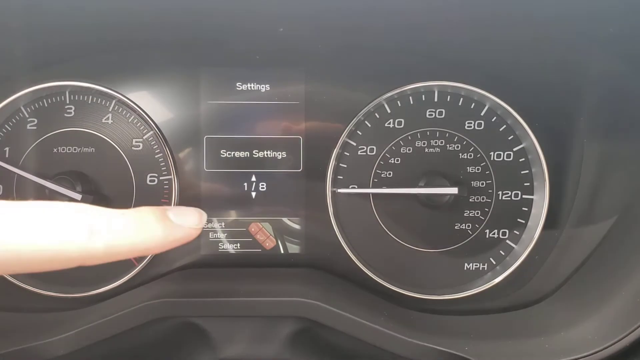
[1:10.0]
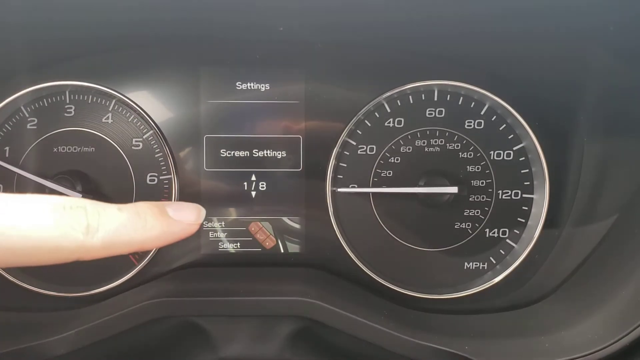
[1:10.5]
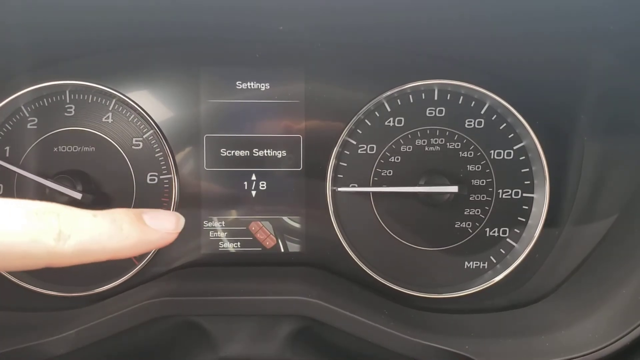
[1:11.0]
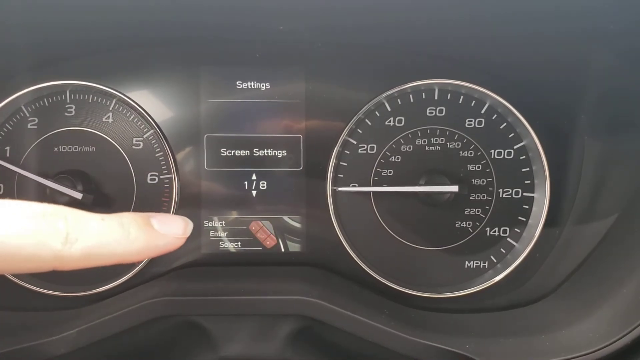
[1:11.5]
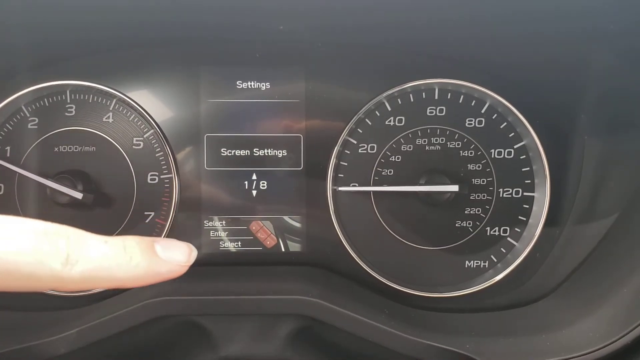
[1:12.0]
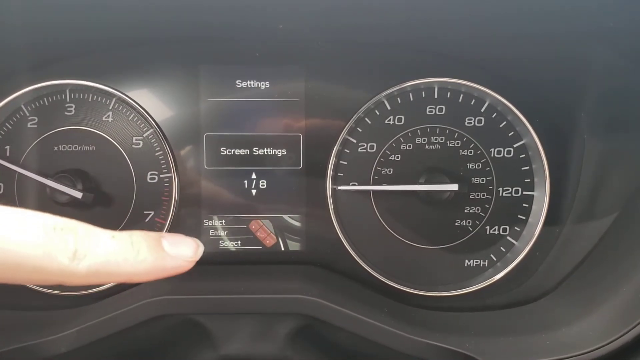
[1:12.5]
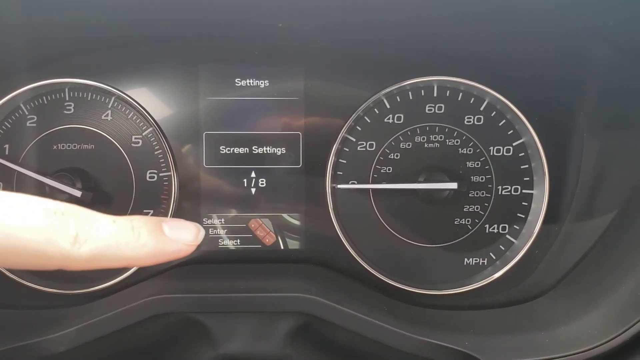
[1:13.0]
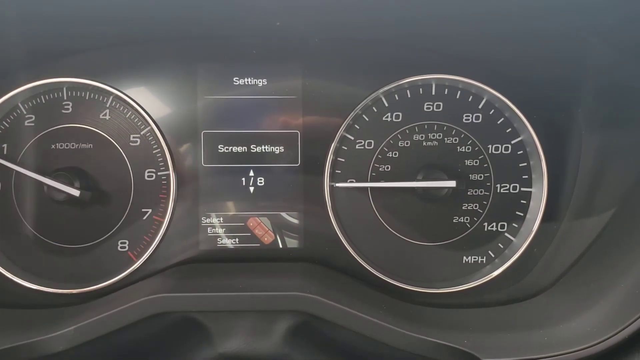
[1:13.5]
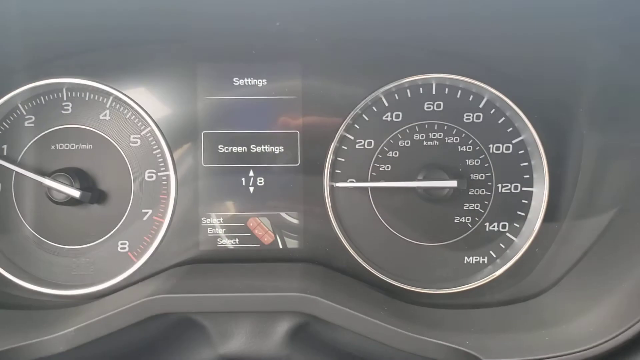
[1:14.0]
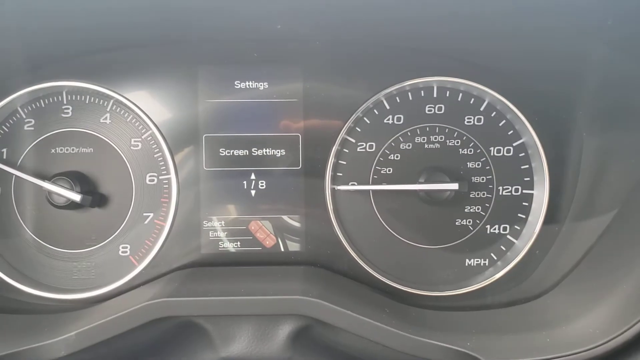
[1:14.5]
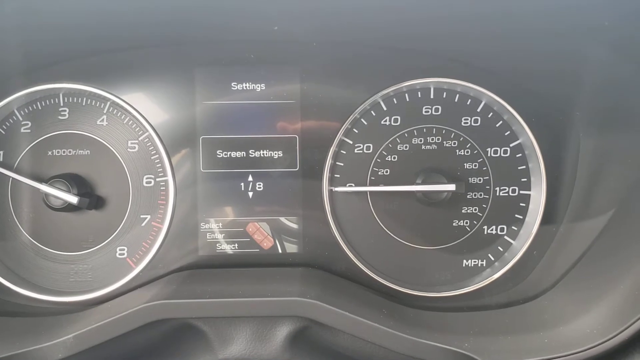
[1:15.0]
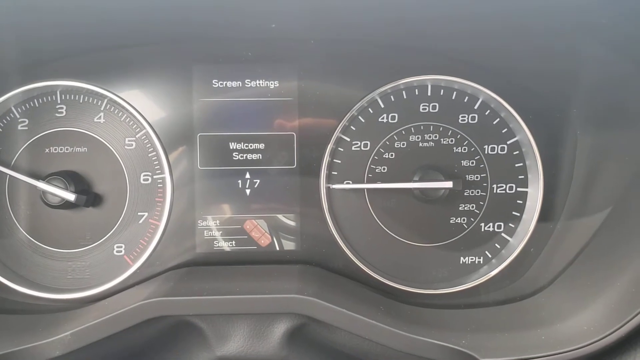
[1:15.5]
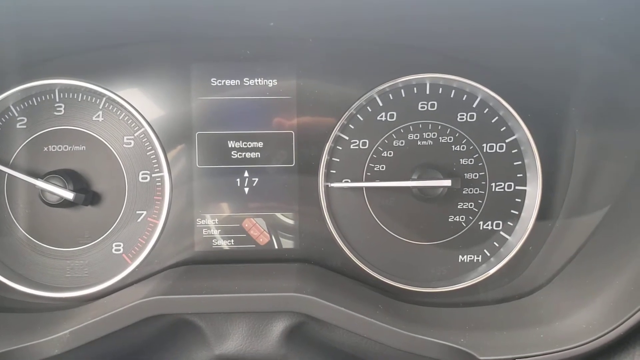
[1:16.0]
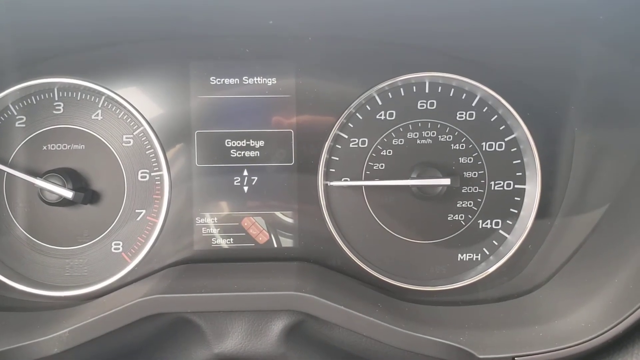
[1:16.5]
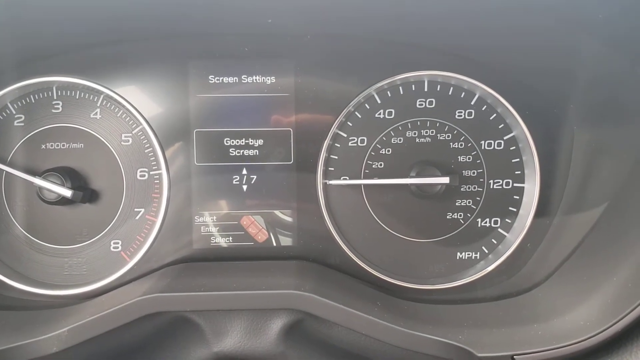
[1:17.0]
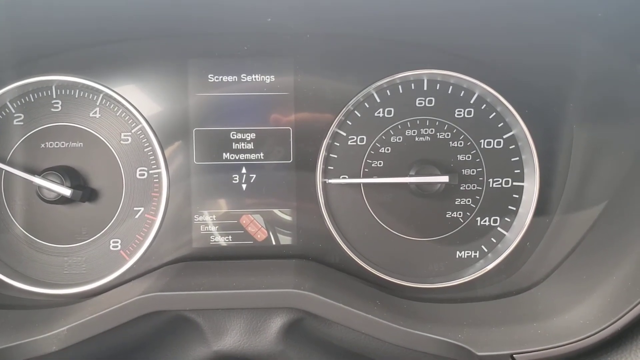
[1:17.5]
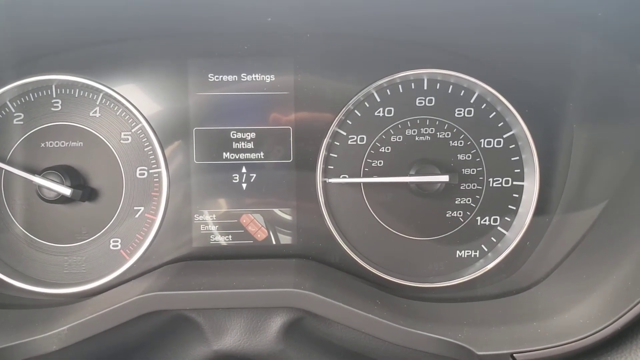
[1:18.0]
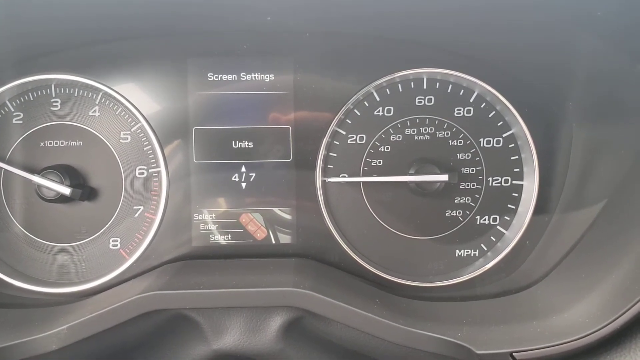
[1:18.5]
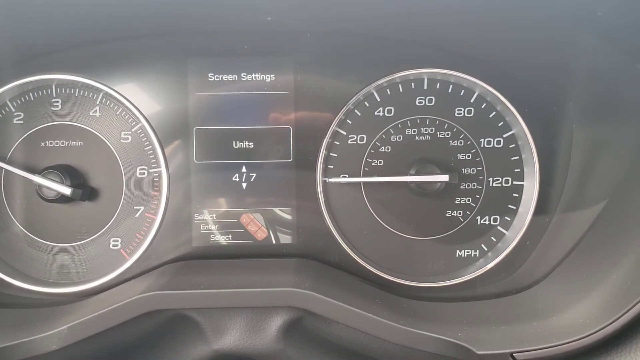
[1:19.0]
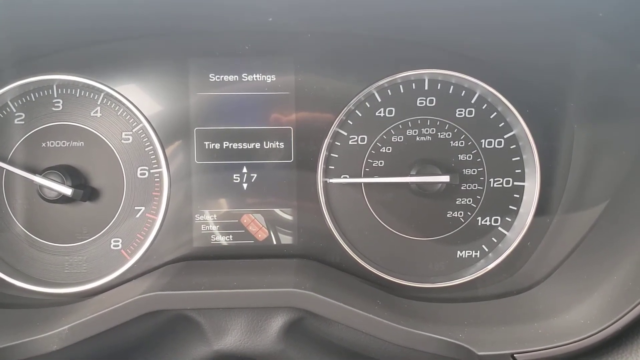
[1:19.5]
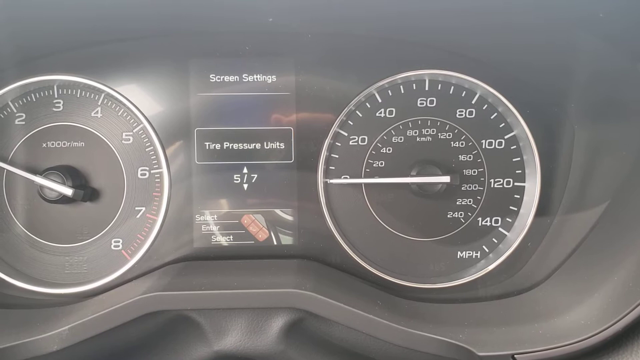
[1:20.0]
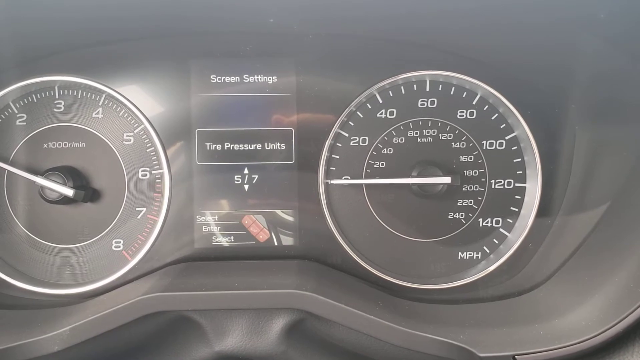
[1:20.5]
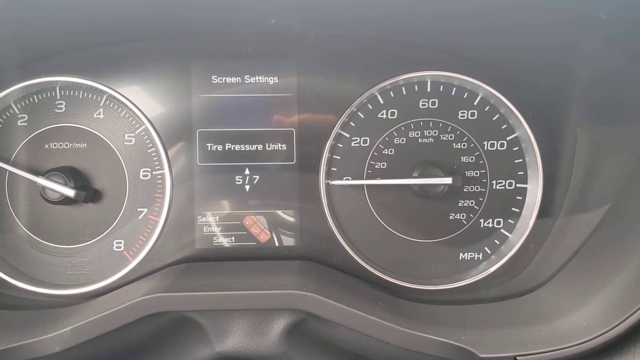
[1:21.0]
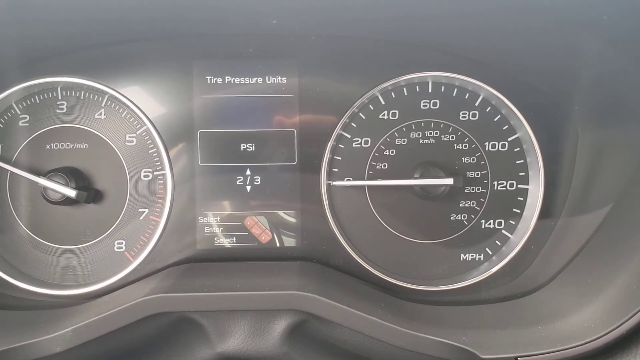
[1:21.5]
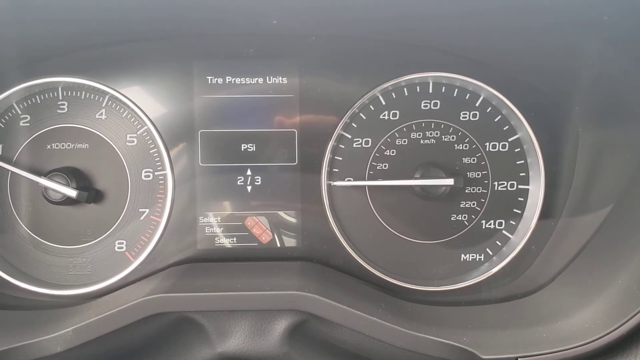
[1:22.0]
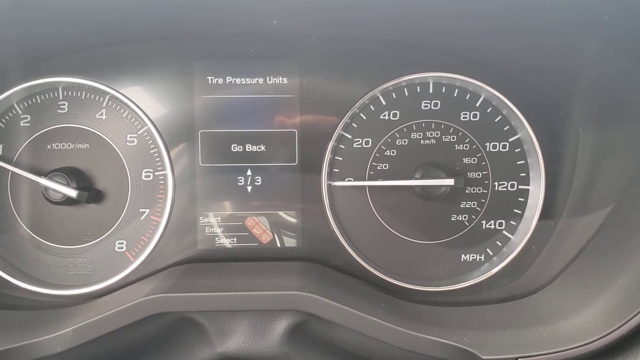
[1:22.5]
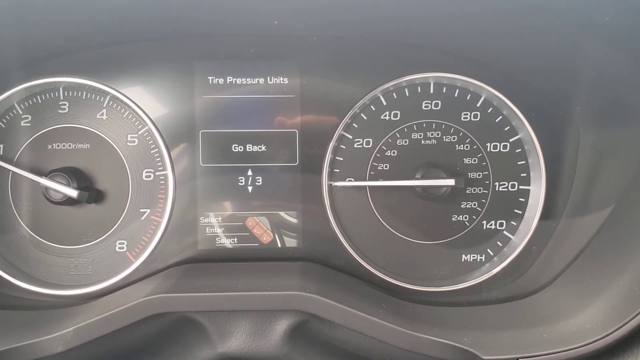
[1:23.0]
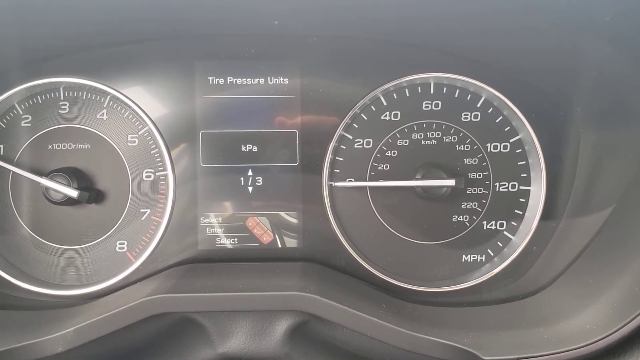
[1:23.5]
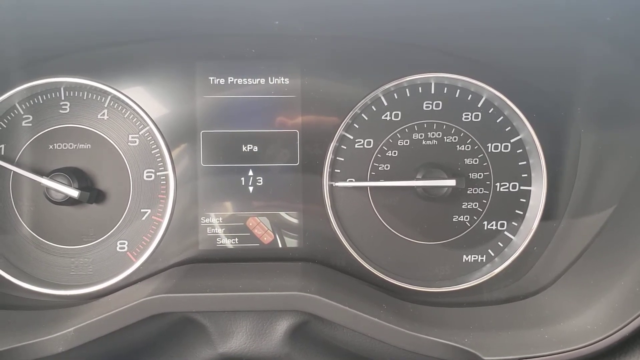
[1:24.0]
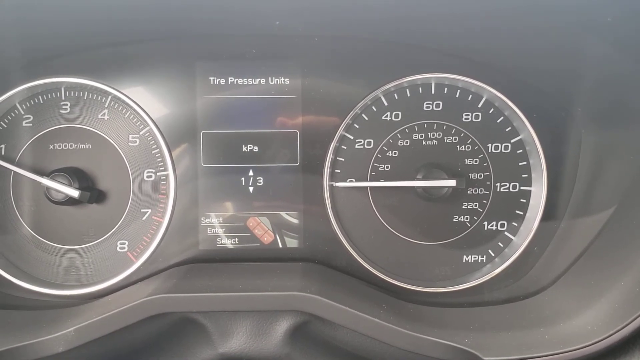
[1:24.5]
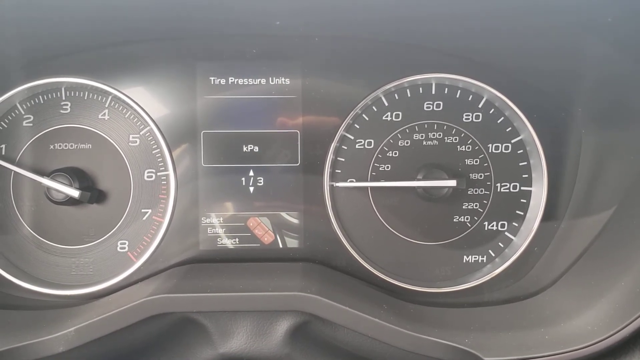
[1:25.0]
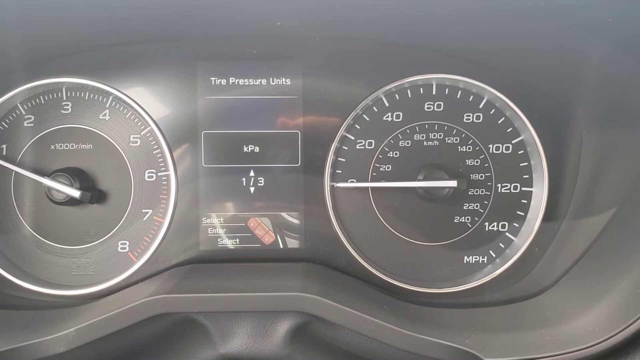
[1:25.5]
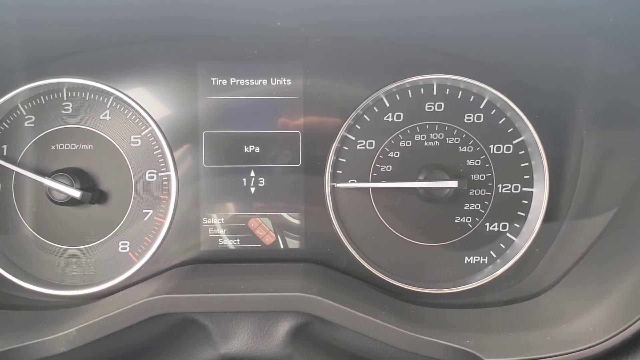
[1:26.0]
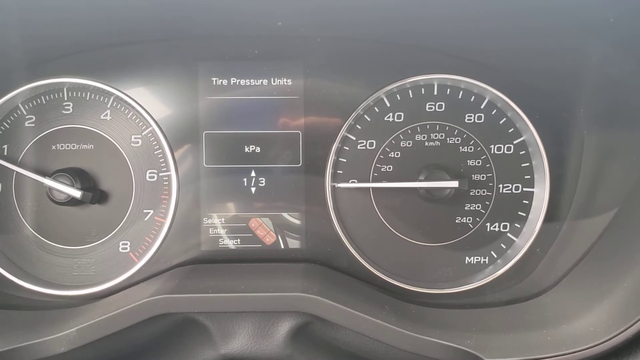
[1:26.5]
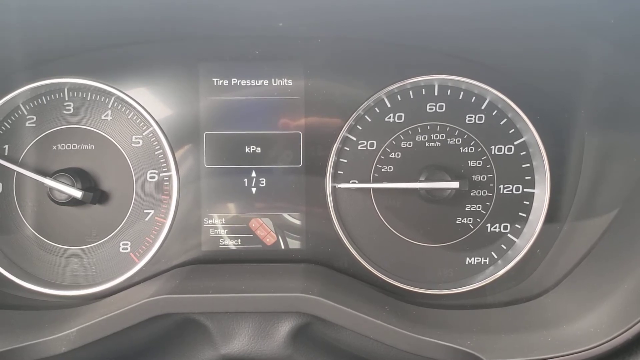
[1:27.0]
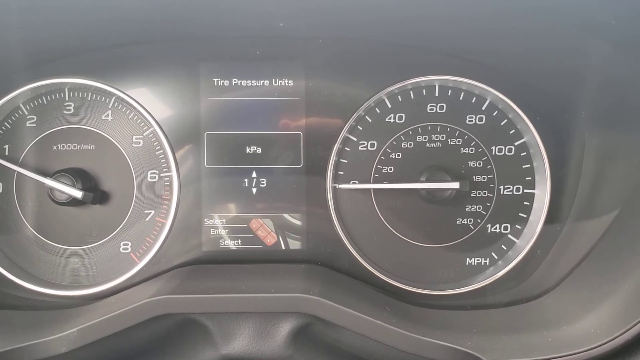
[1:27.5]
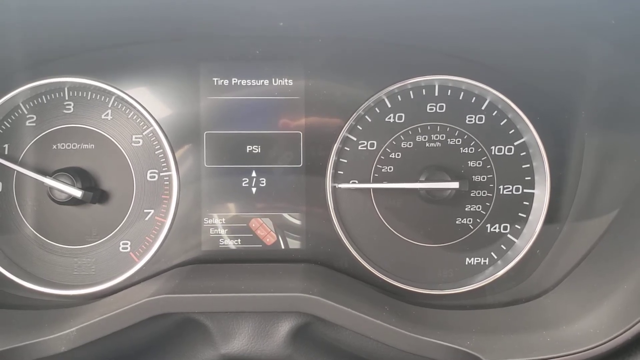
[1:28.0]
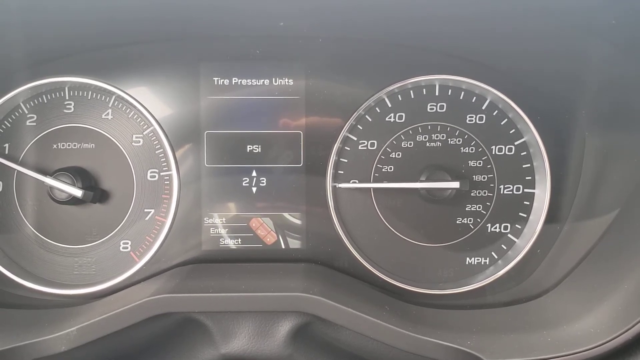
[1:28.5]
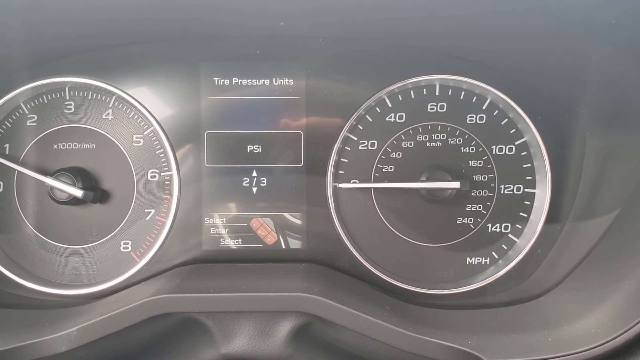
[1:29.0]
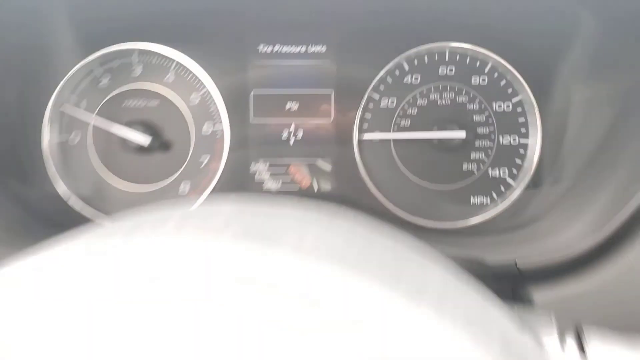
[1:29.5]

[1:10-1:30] The digital screen between the two meters on the driver's dashboard, the area that said "MPG", shows "24" and "24.5" mileage, and the gas gauge from E to F is mostly full. The screen says "settings" and "screen settings", with an up and down arrow and "1/8" or "1/B". The person points to it with the left hand. It says "select", "enter", "select", and the person points at the first select button, then moves their fingers down toward the enter area at the bottom. The screen then says "units", "tire pressure units", "PSI", "go back", "KPA".